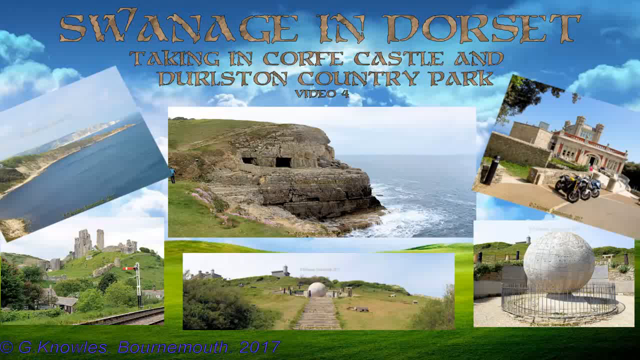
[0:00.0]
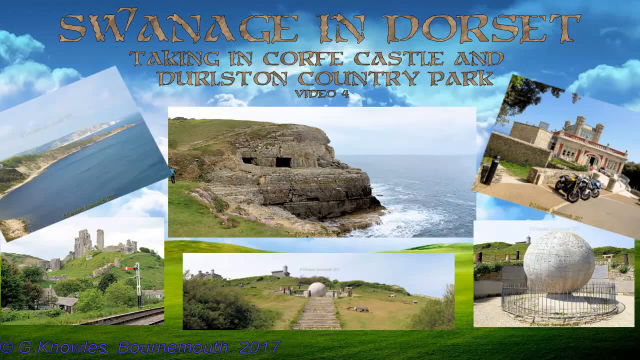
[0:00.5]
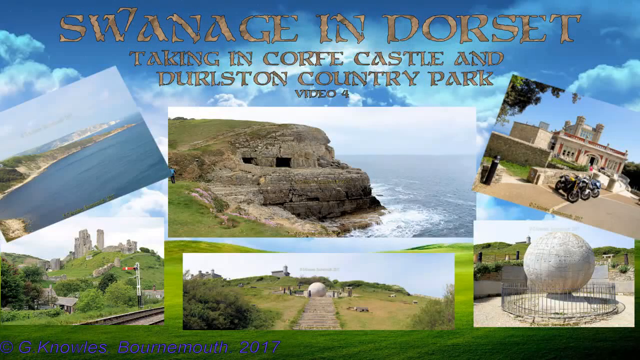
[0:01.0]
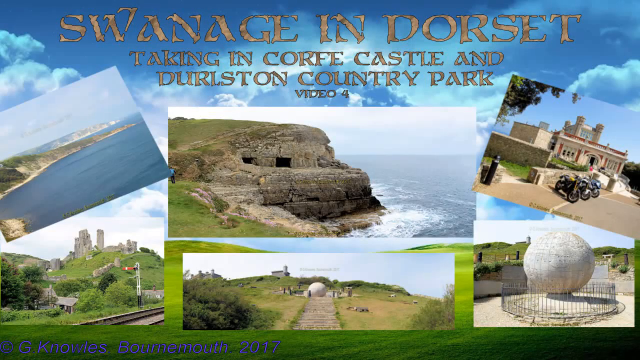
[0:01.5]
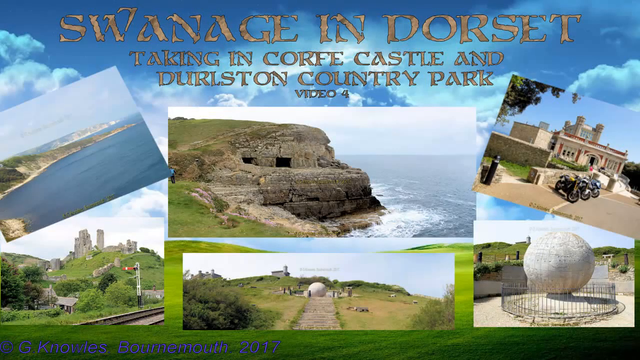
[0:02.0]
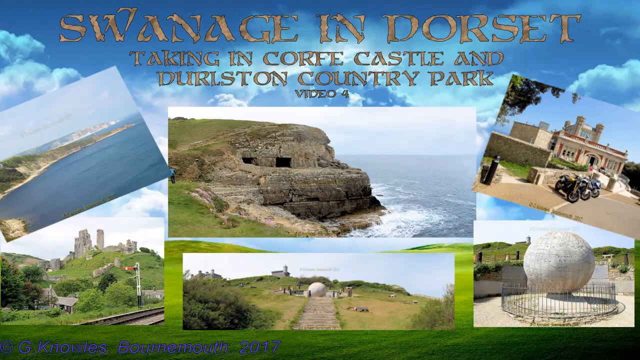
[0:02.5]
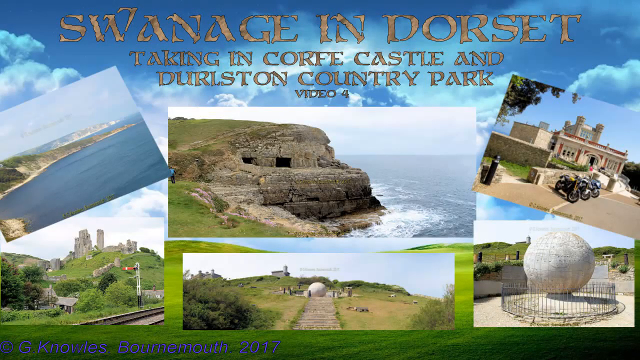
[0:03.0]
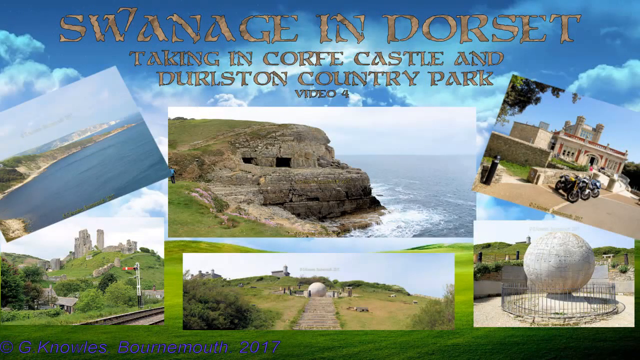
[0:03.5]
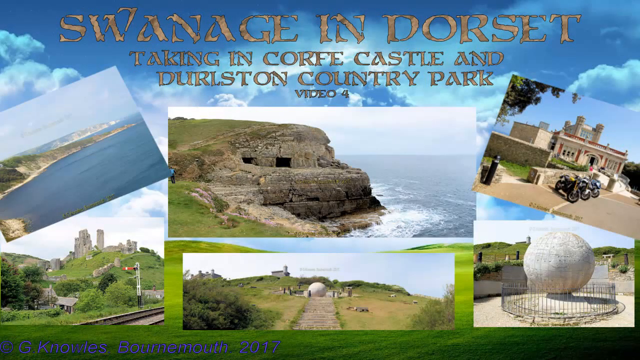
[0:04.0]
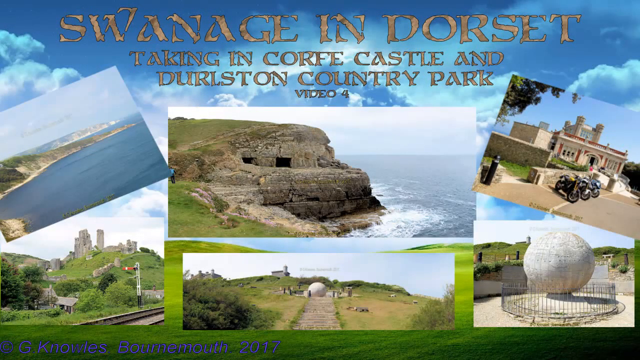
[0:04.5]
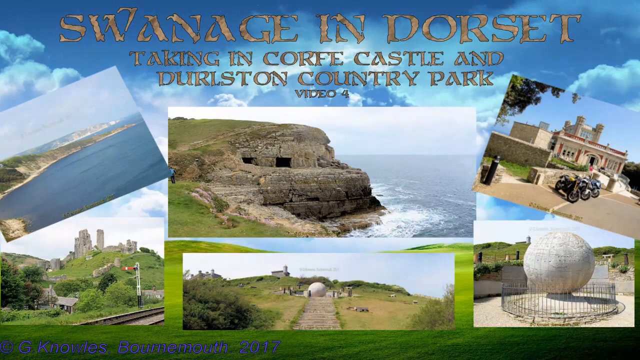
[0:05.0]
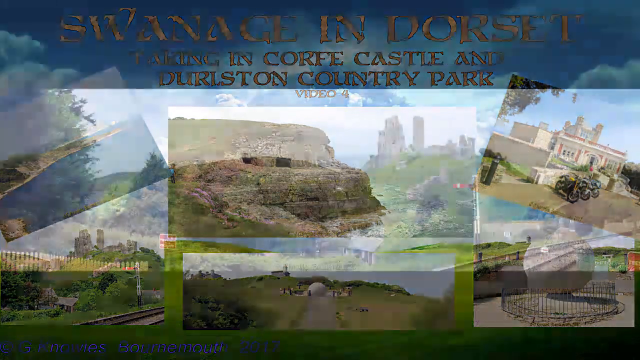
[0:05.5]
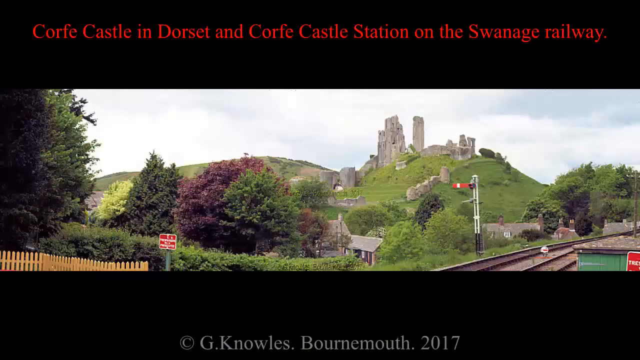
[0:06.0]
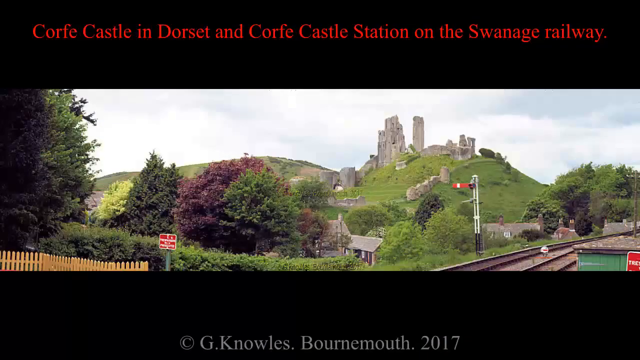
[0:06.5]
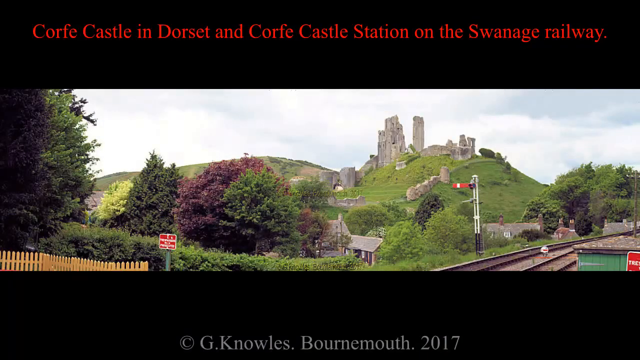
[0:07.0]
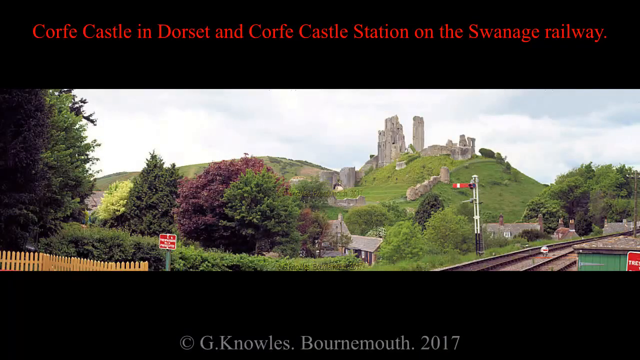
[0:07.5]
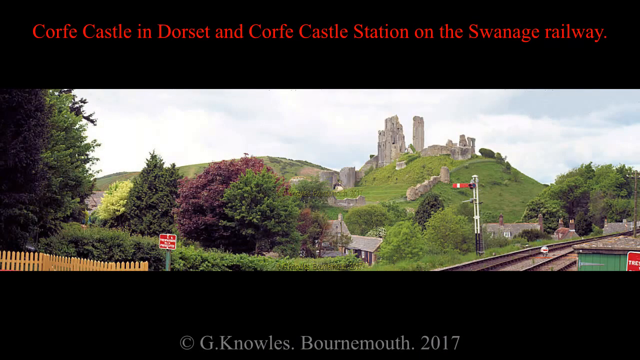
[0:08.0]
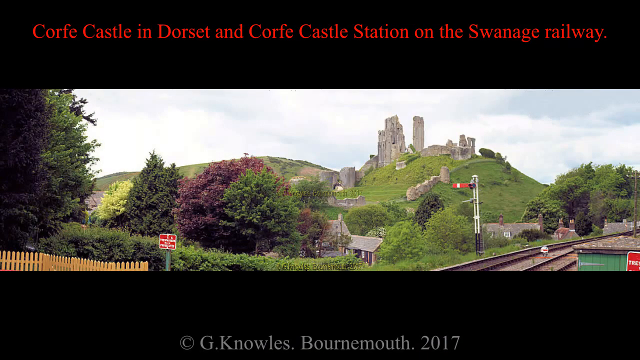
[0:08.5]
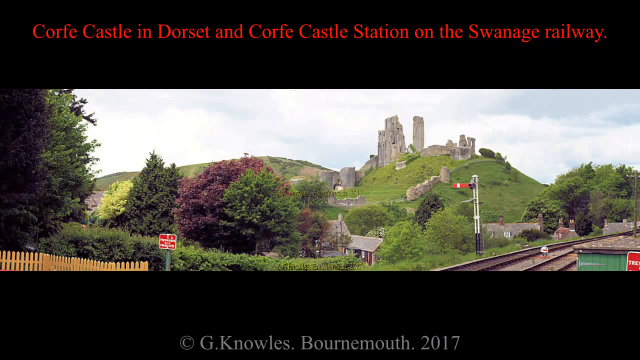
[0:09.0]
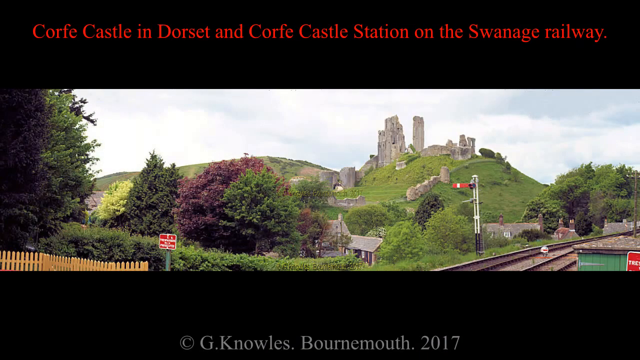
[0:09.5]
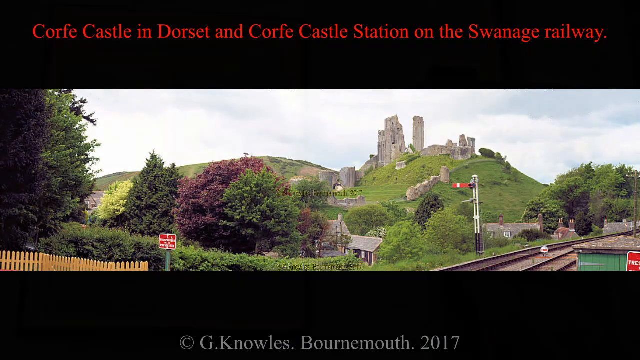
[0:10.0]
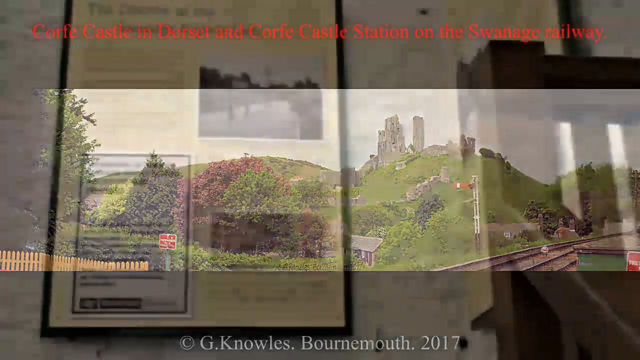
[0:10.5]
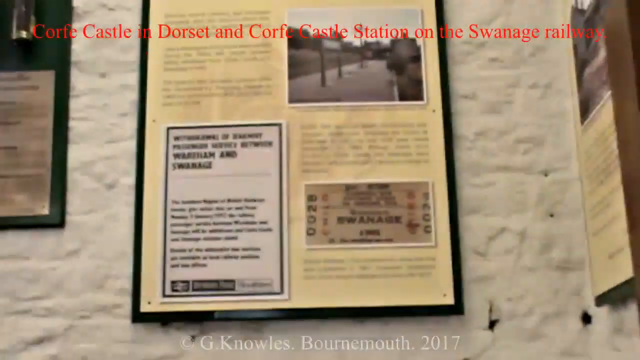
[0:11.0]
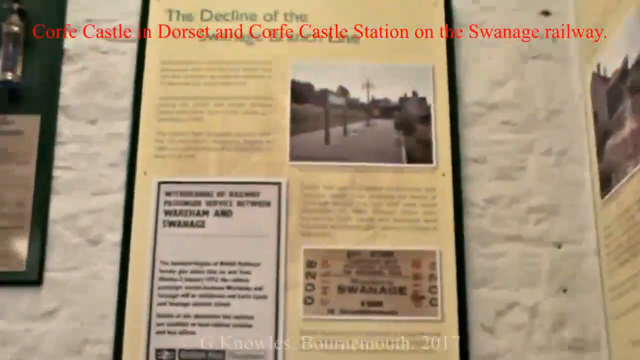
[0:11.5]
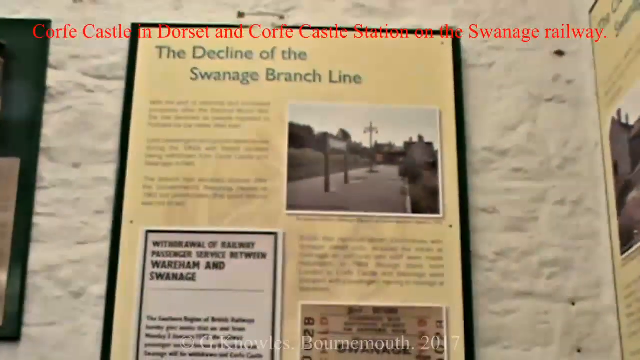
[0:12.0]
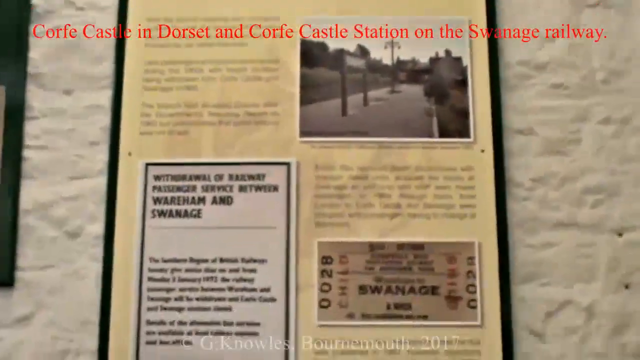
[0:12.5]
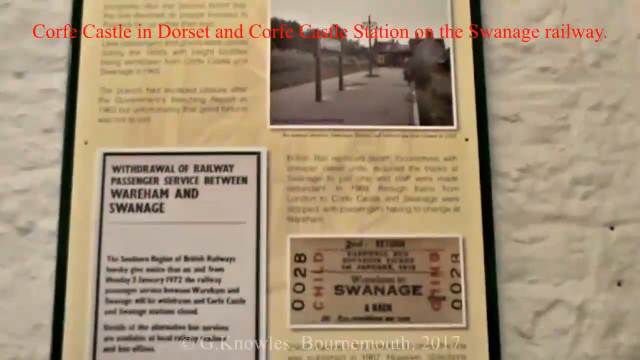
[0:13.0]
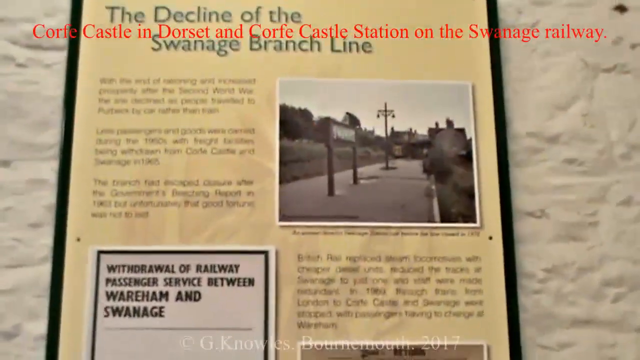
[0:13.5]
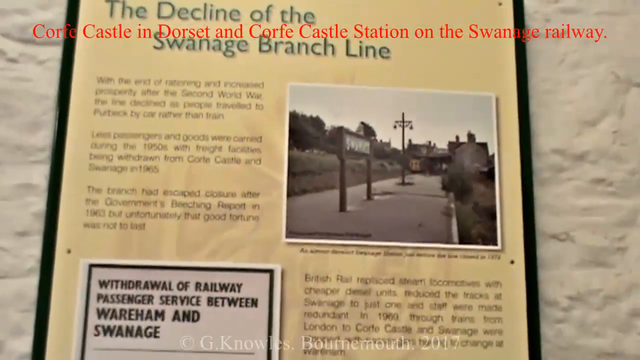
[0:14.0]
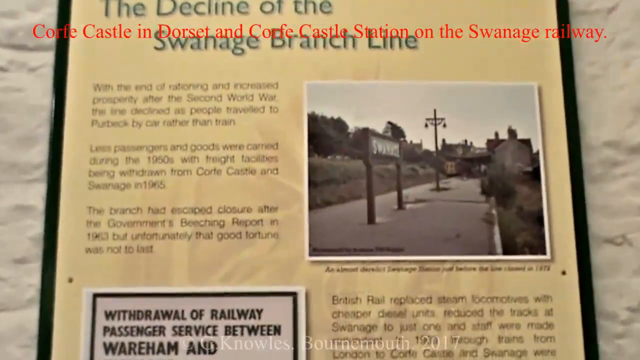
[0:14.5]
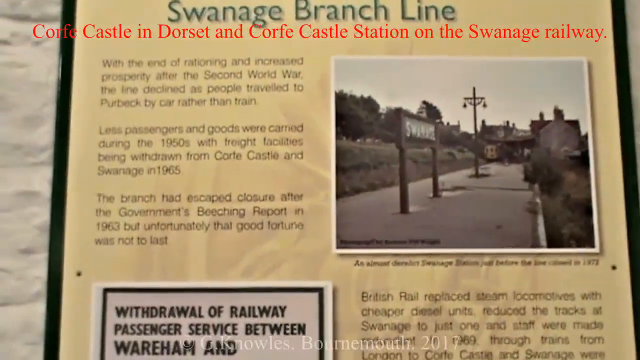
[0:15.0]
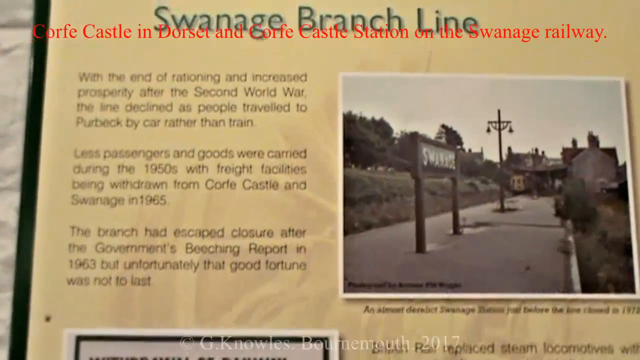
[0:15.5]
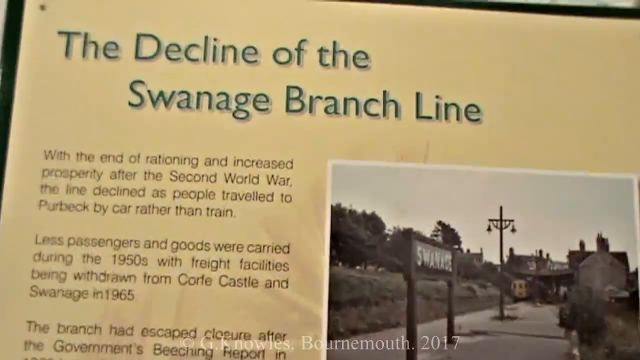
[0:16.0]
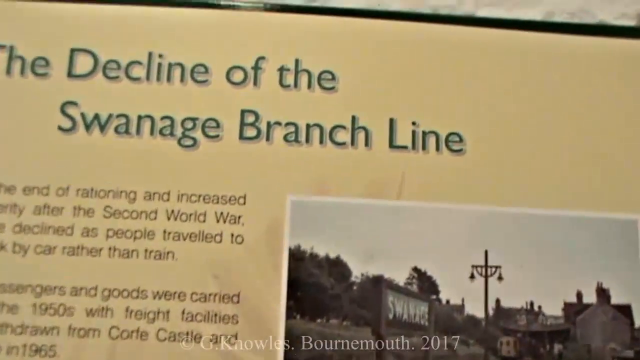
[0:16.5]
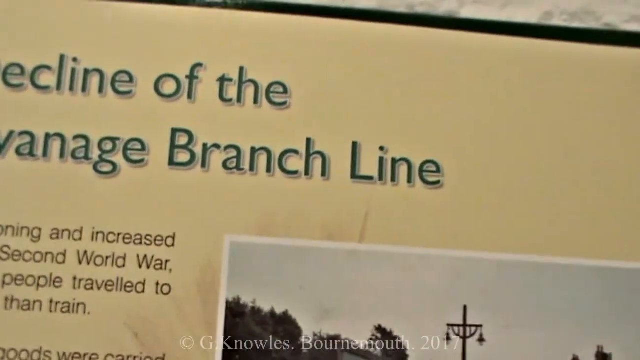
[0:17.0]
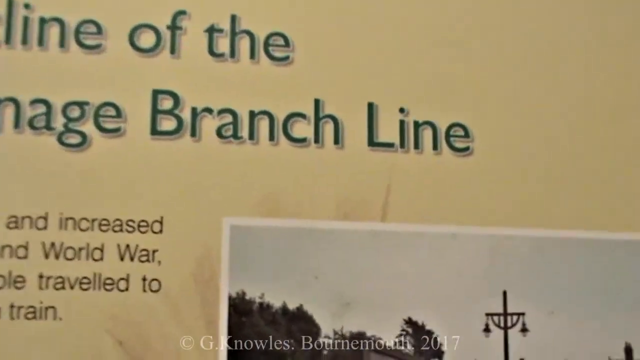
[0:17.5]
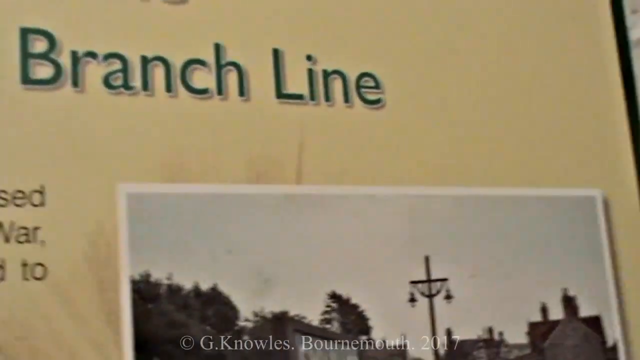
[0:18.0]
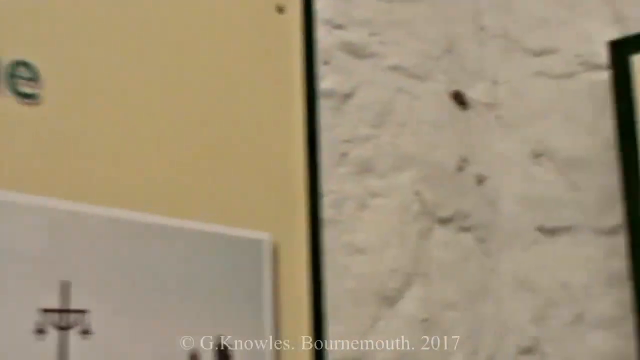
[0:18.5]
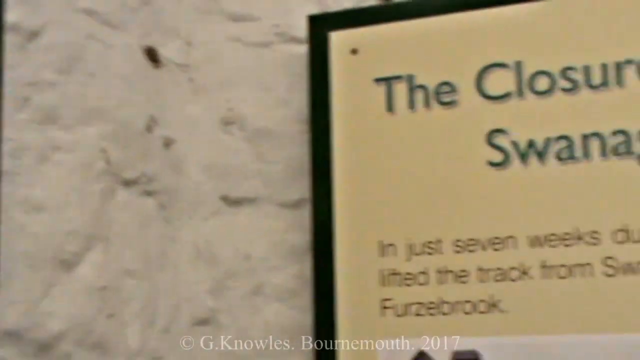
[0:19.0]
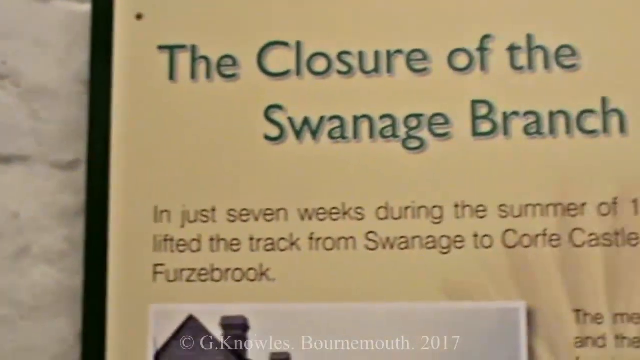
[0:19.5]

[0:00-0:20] The video opens with an intro-style picture with text reading "Swanage in Dorset and this is taking in Corfe Castle and Durleston Country Park," followed by text reading "video 4." Many different pictures are arranged in a sort of scrapbook fashion, some sideways and some straight. Next comes a single picture of what appears to be Corfe Castle, with red text at the top reading "Corfe Castle in Dorset and Corfe Castle Station on the Swanage Railway." The footage then shows what seems to be the inside of the castle, with displays about the decline of the Swanage branch line and the closure of the Swanage branch line.